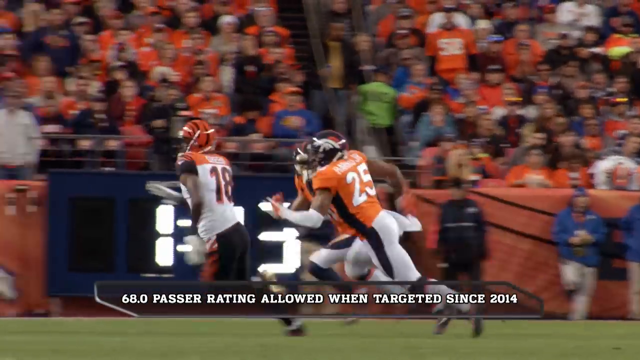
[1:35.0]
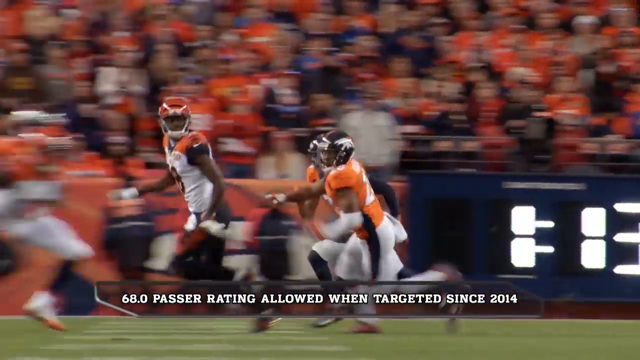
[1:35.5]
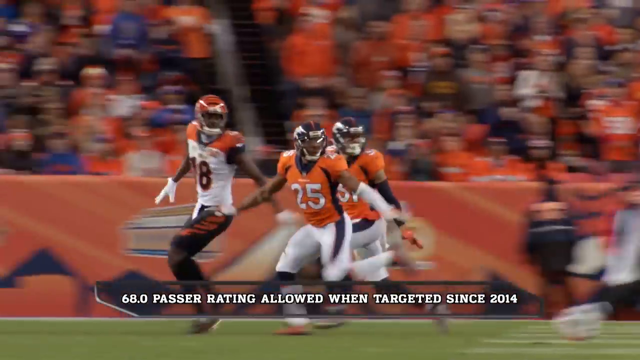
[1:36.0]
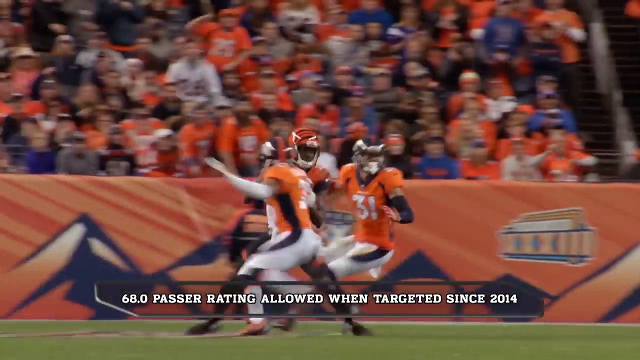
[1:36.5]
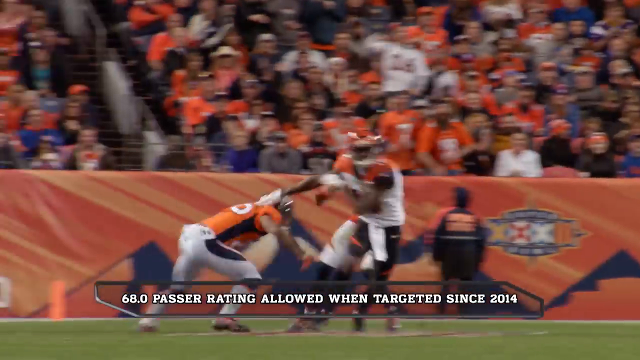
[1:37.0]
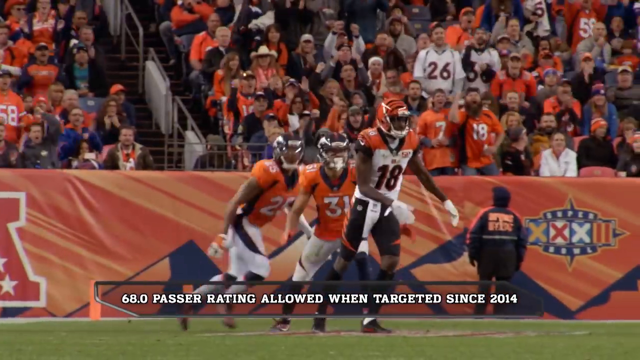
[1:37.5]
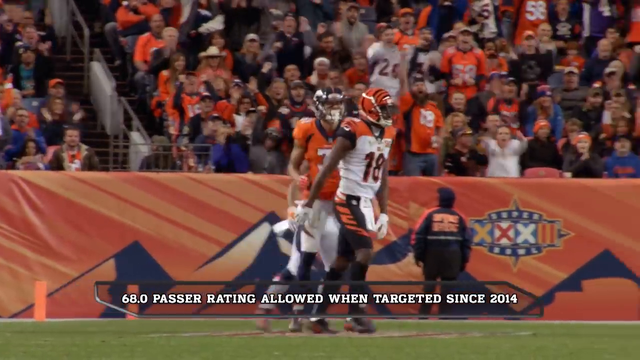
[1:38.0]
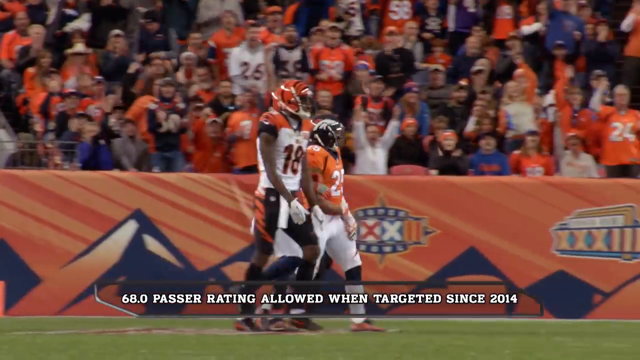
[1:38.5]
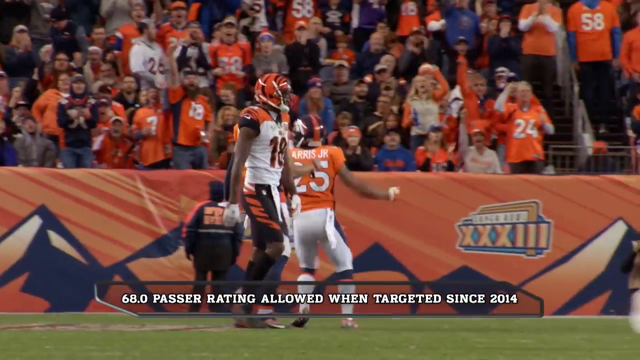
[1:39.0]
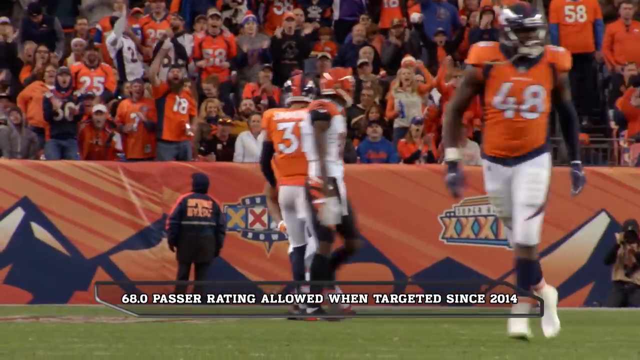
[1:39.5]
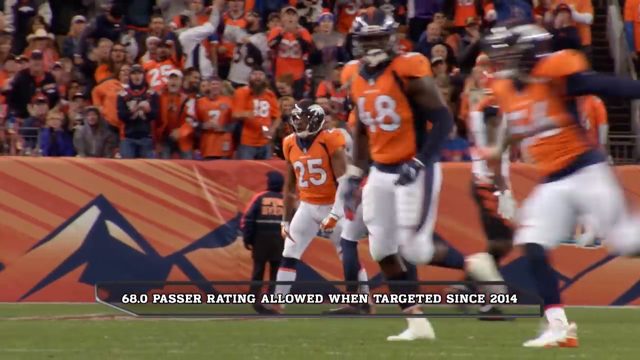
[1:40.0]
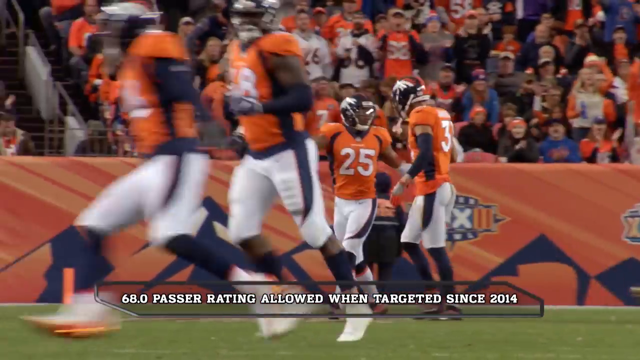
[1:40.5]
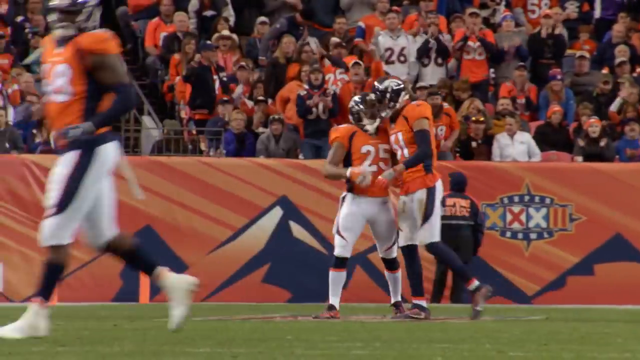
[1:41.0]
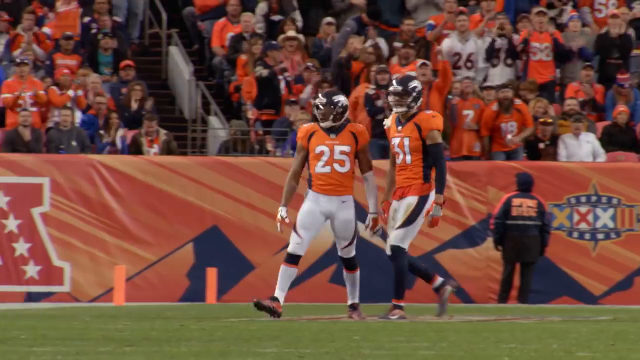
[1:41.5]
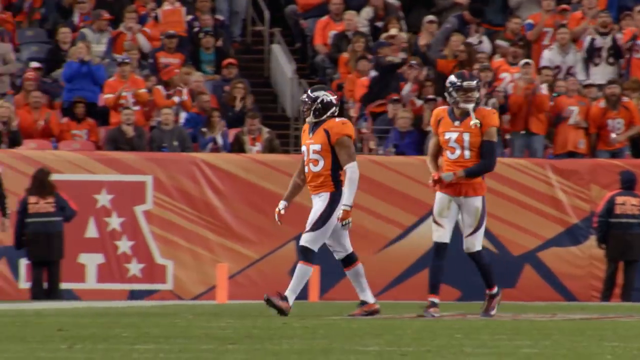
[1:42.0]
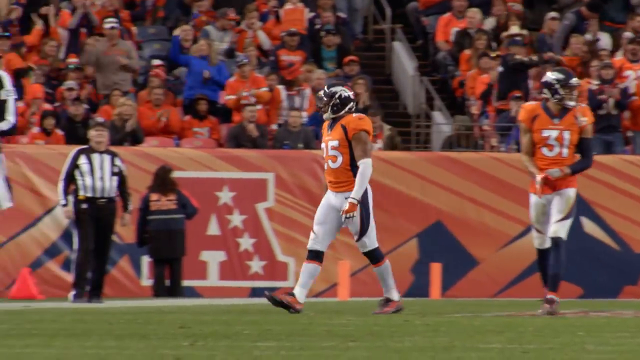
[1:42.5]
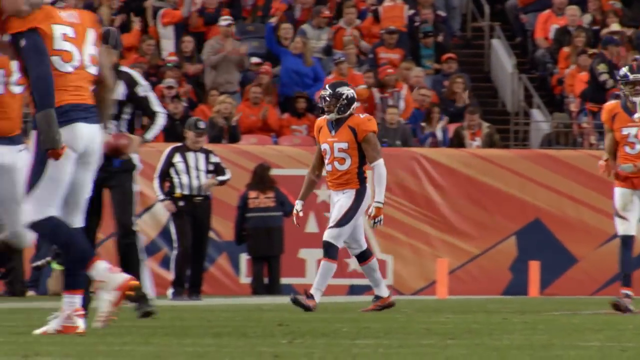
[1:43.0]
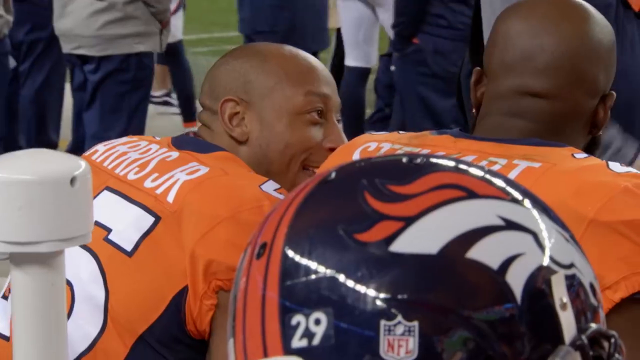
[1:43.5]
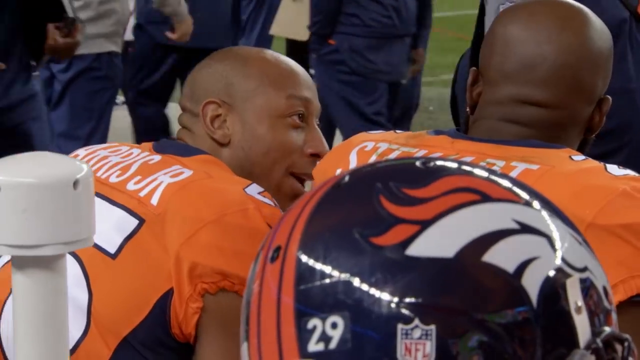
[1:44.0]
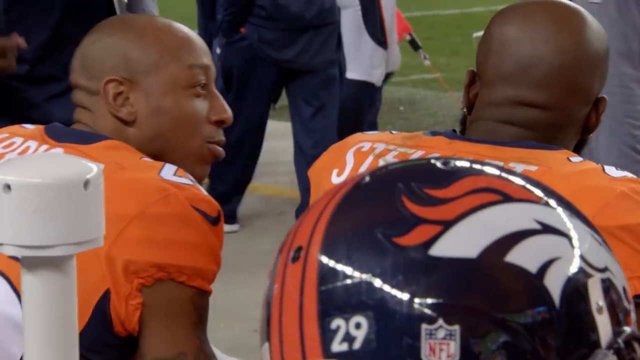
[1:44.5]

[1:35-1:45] Chris Harris Jr., wearing number 25, chases a Cincinnati Bengals player wearing number 18, who kind of pushes off against him. Harris Jr. then celebrates with another Denver Broncos player wearing number 31. Fans in the background are all cheering, and a large banner drapes the front of the stands in front of them, showing the Rocky Mountains, "Super Bowl" and, in the middle, "XXXII". The video cuts to Chris Harris Jr. sitting on a bench next to a bald-headed player with an earring in his left ear, whose jersey shows only "S-T-E-W", apparently Stewart. They sit talking on the bench.